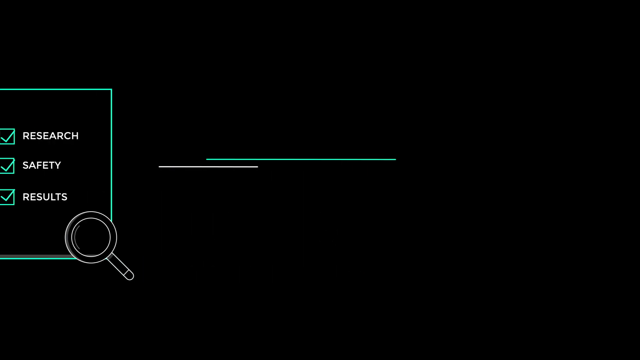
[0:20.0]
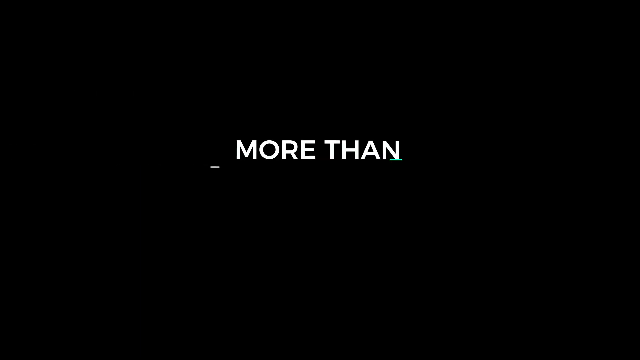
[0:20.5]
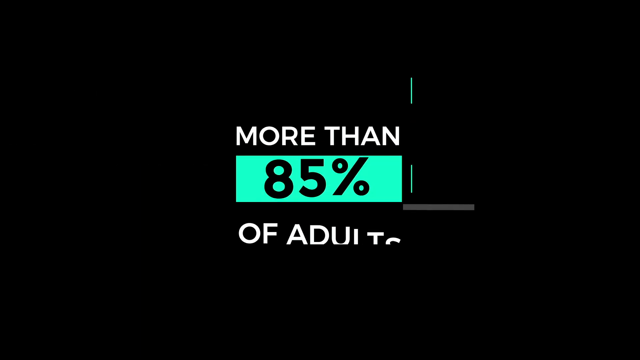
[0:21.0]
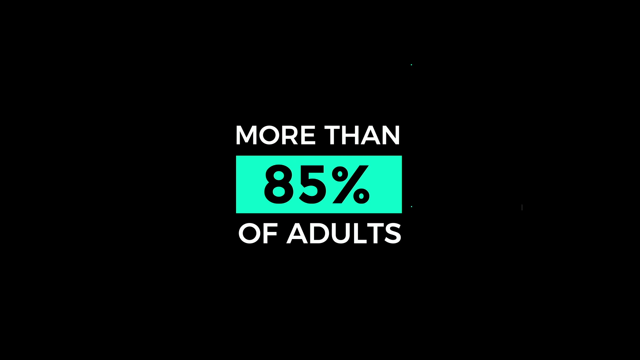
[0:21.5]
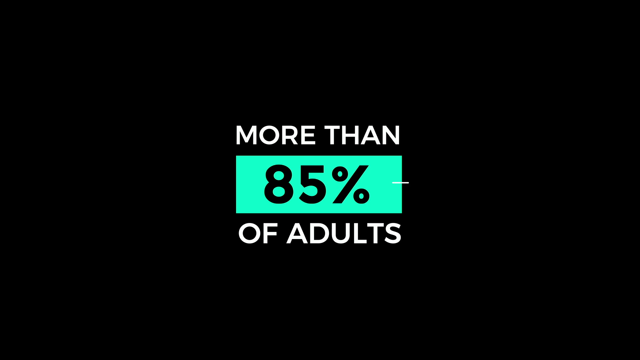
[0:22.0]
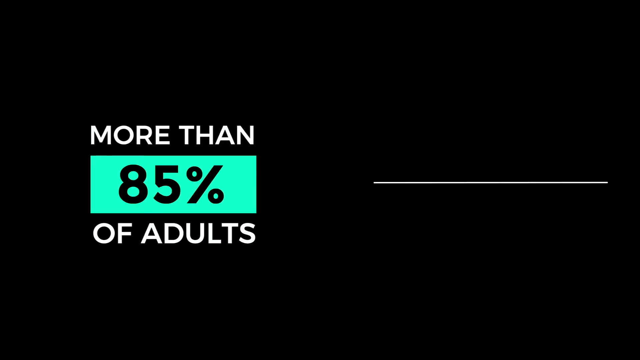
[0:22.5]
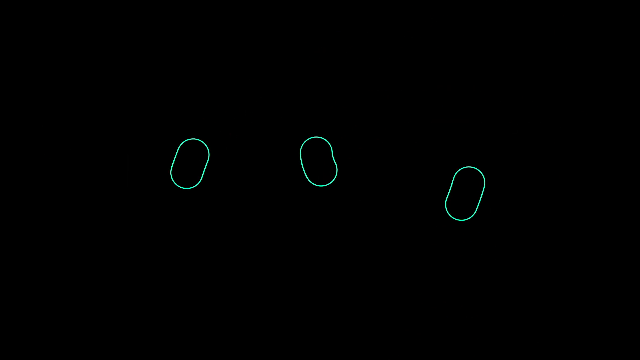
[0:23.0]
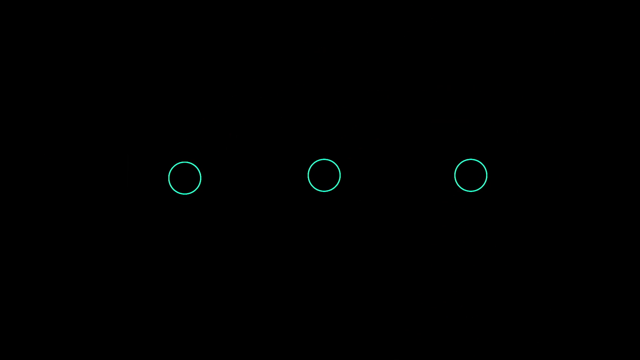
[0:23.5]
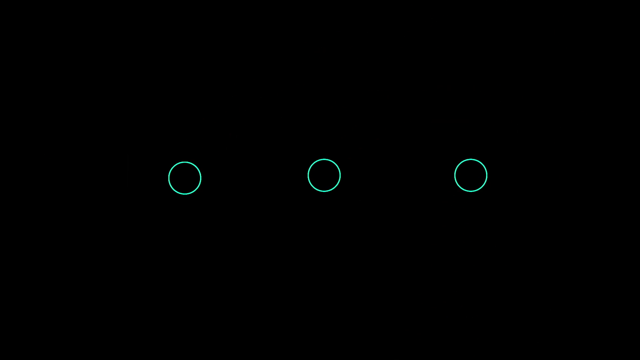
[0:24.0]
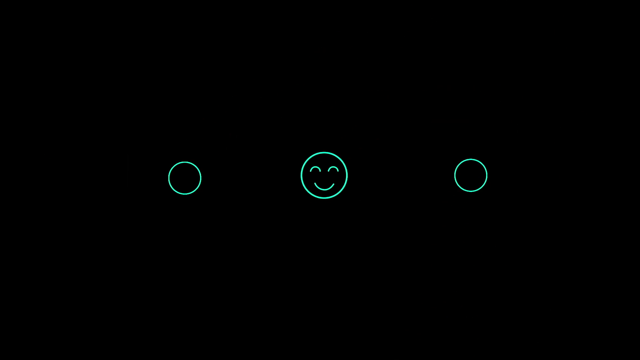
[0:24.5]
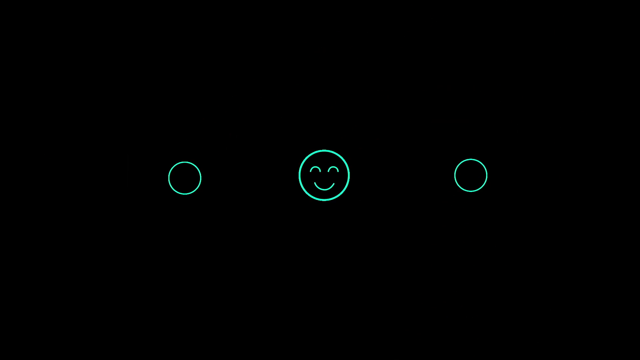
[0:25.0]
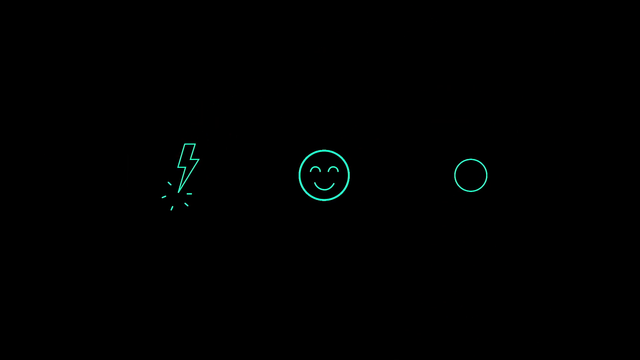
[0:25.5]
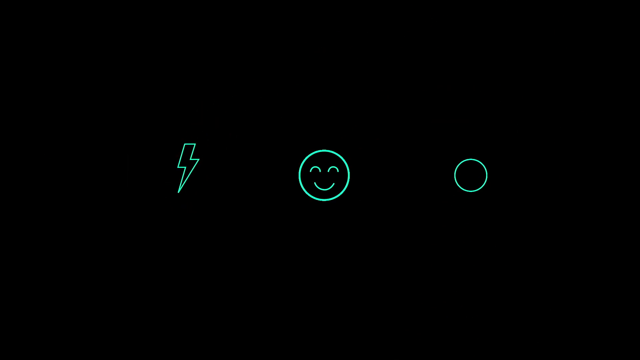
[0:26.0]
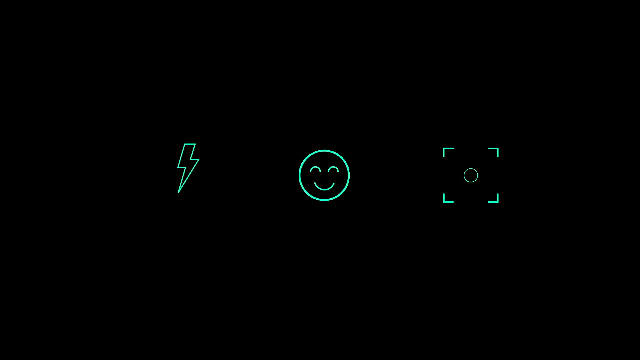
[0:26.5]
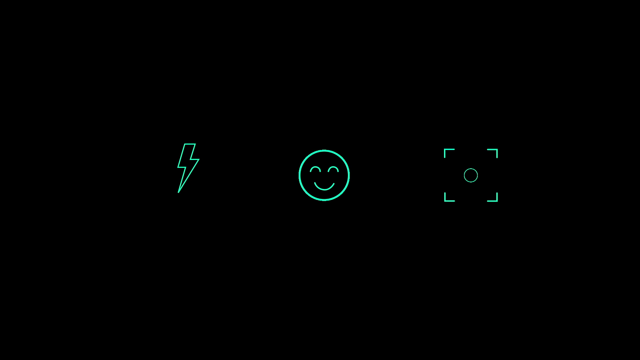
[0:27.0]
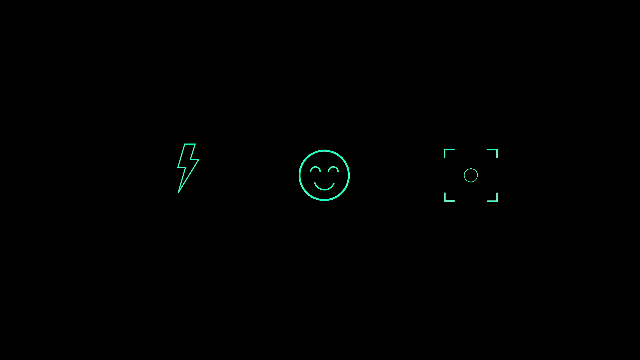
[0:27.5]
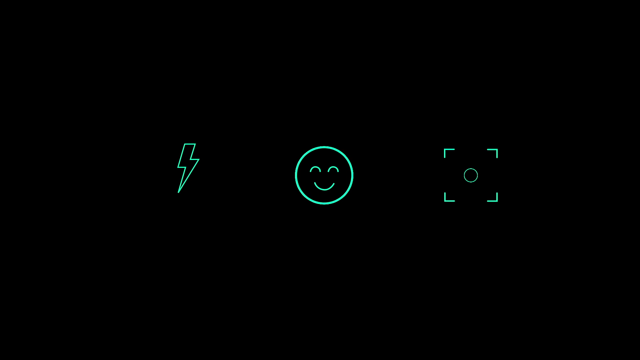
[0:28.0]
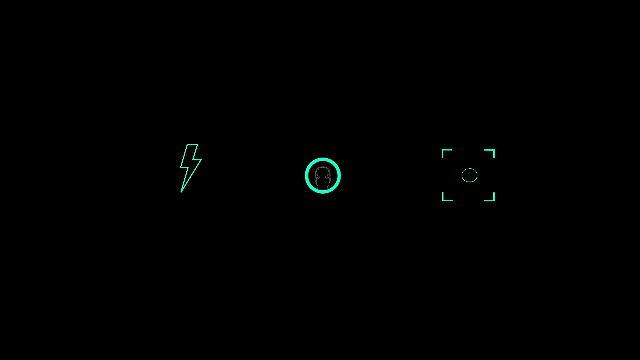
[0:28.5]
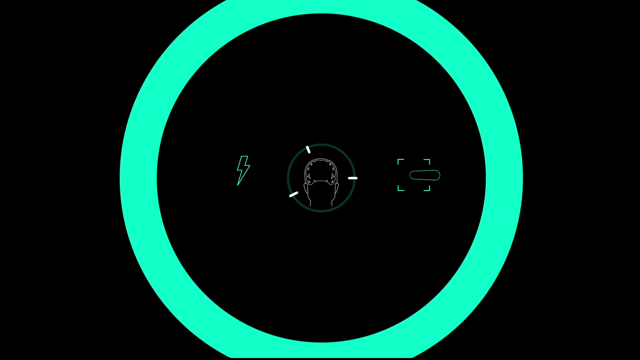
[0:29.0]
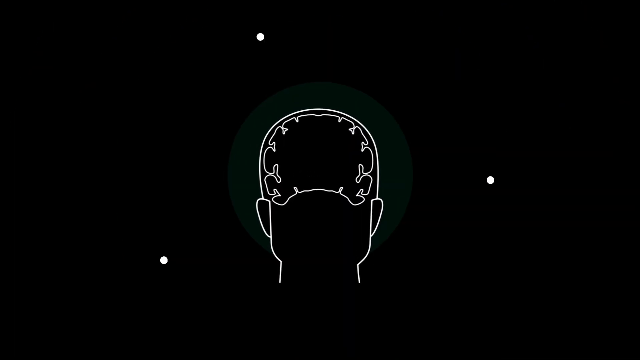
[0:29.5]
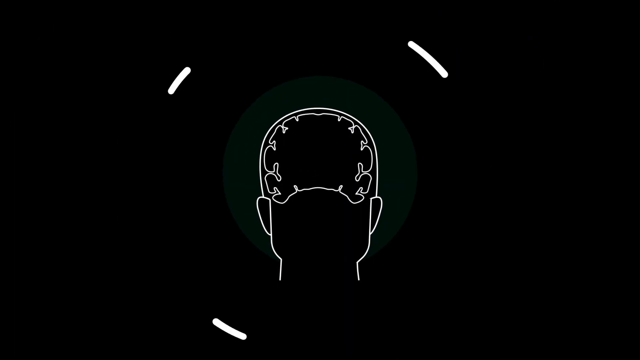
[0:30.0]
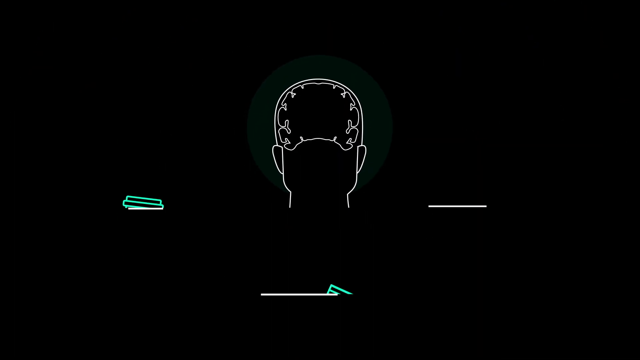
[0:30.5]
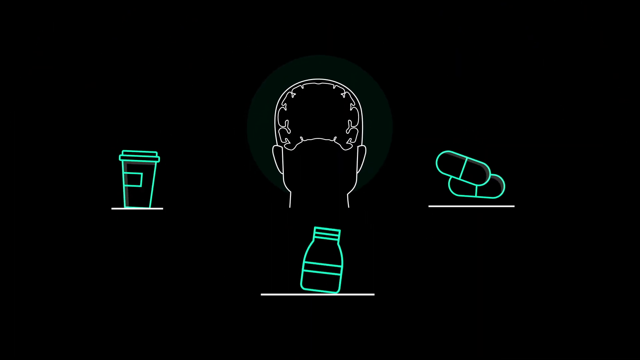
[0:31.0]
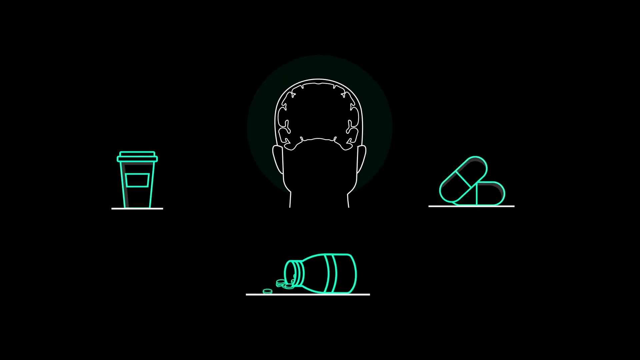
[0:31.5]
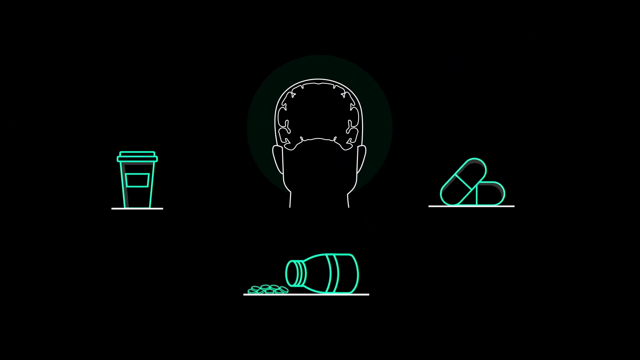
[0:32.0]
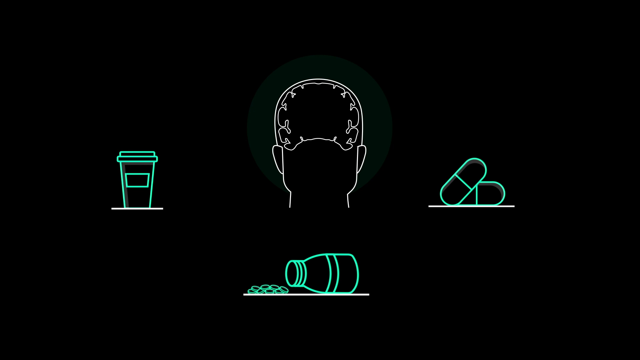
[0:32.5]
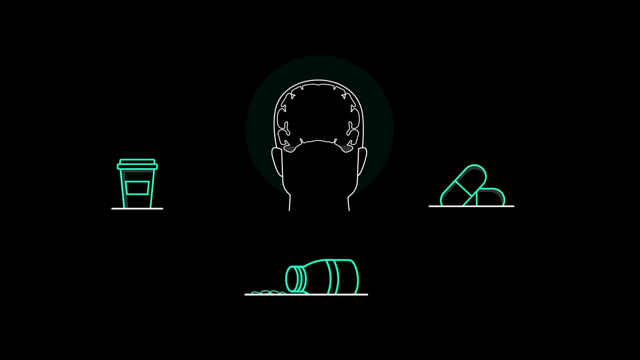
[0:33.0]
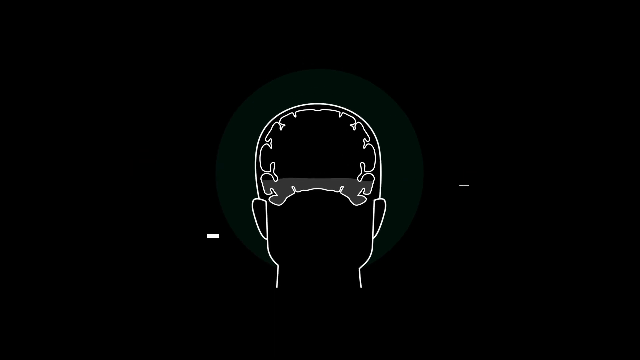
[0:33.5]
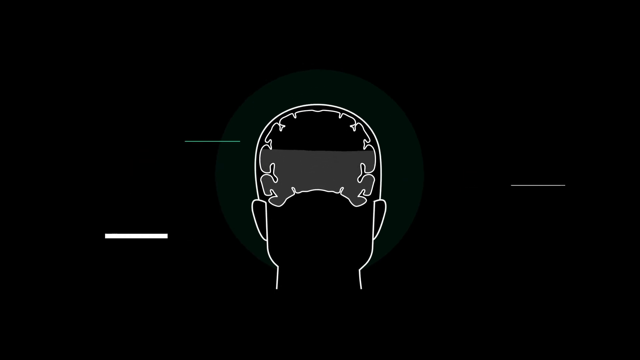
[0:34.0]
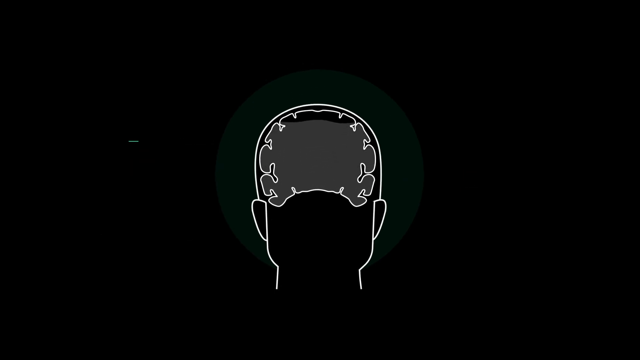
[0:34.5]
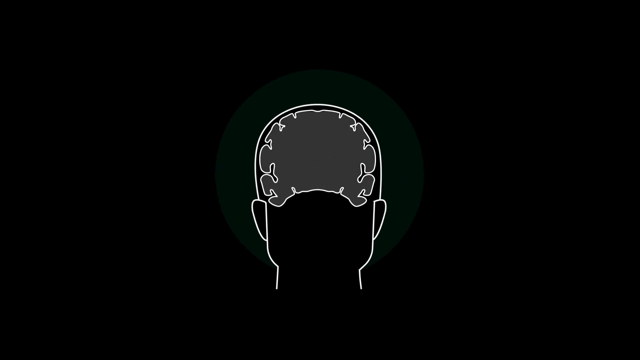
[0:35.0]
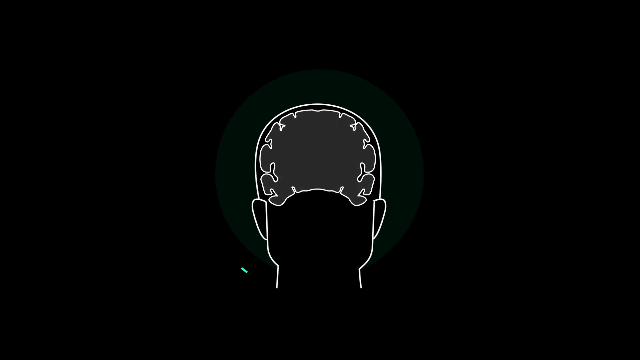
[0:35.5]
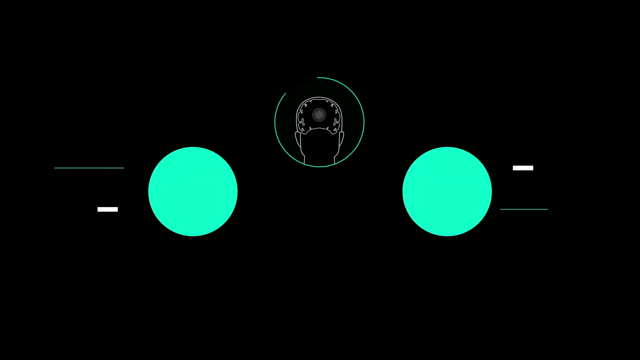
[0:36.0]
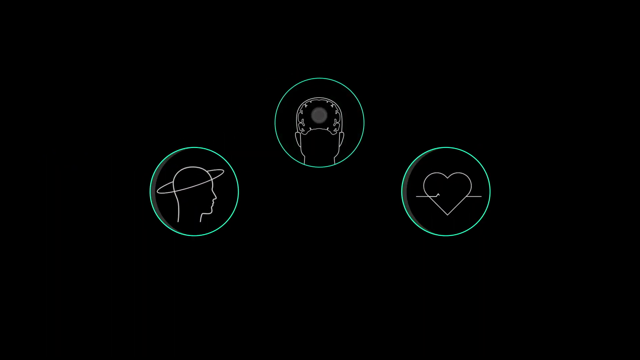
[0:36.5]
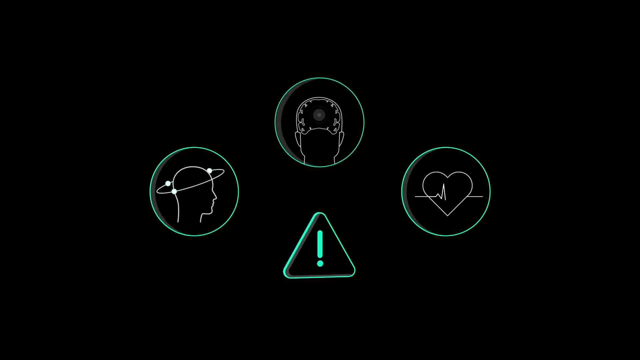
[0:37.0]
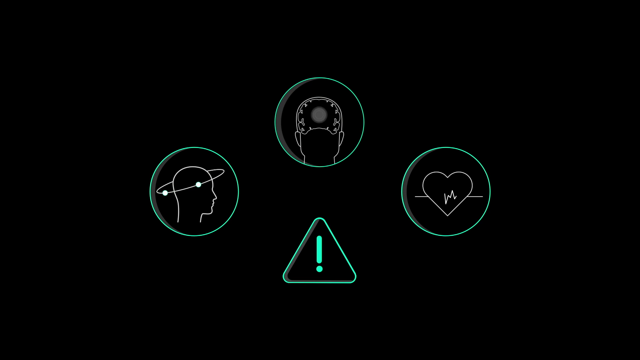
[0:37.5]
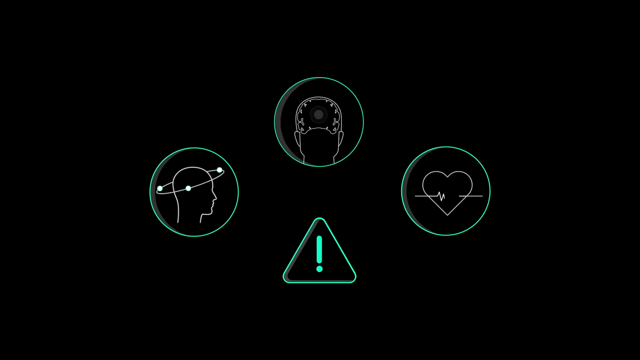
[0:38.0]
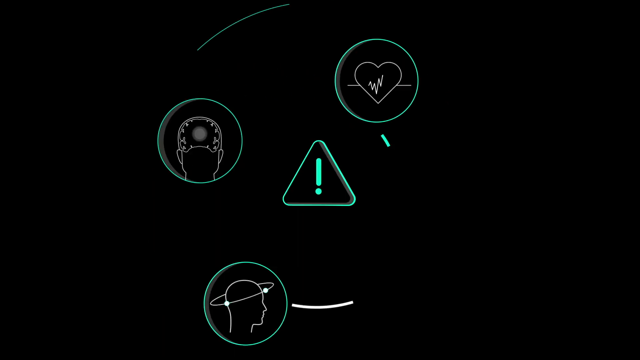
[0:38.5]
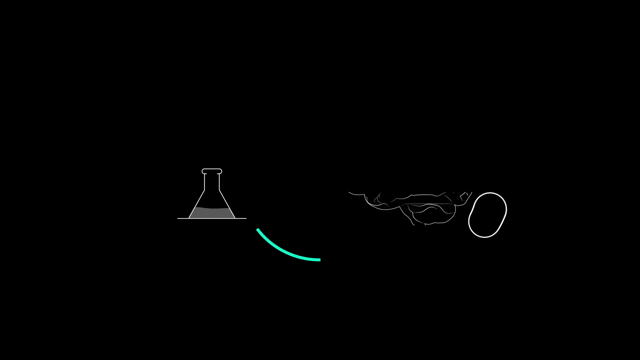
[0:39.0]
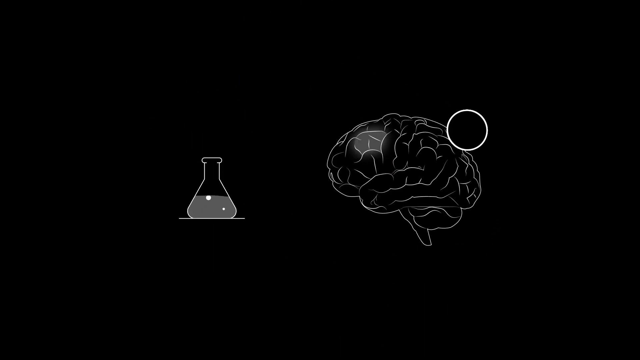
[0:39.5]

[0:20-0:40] In this animated drawing, the text "research safety results" appears on what looks like a piece of paper. Text then reads "more than 85 percent of adults," followed by a smiley face and a lightning bolt, and a third circle to the right turns into something like a camera lens or a sight. The back of someone's head appears, seemingly with the brain inside it. Around it are pills to the right, a bottle, maybe of alcohol, spilled over, and a coffee cup to the left. The brain is then surrounded by different logos and circles: one circle has a heart with a heart monitor line going through it, and another shows a human head that looks like it has stars or orbs circling around it. A question mark or an exclamation point is at the bottom of the screen, and different logos begin to appear on the screen.